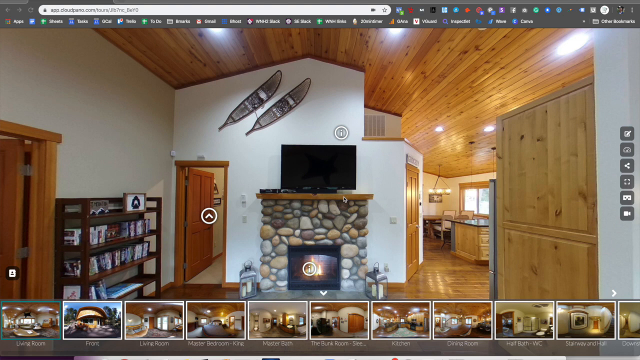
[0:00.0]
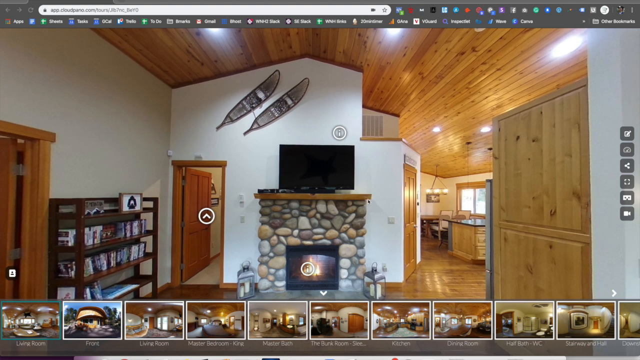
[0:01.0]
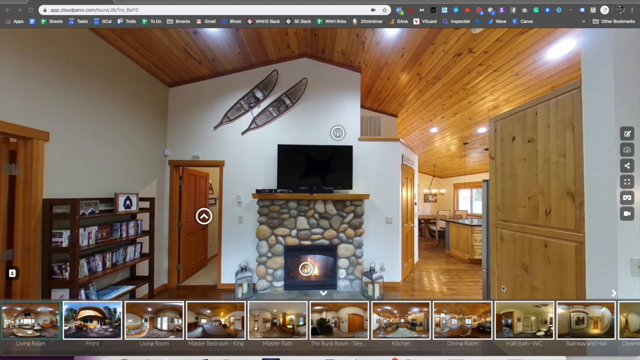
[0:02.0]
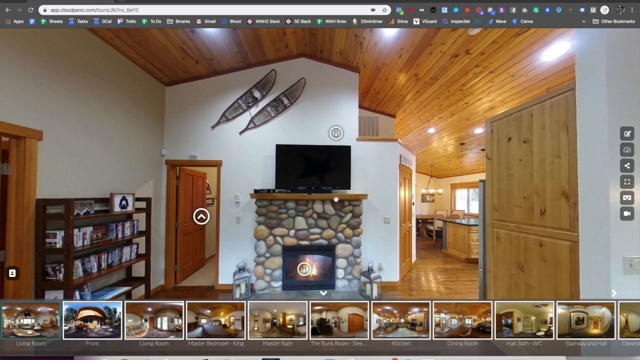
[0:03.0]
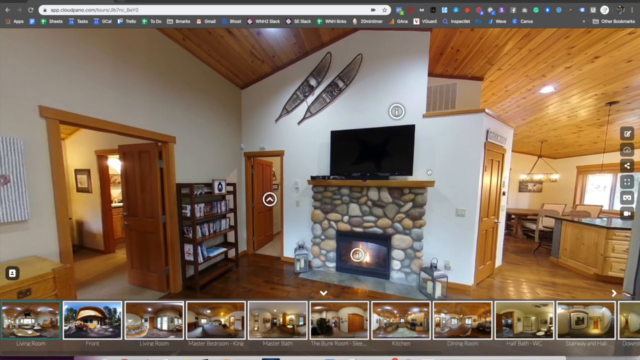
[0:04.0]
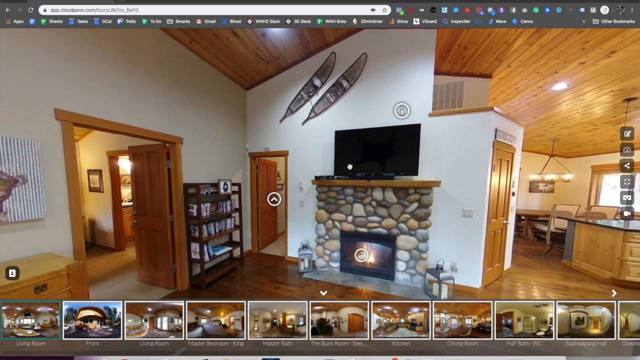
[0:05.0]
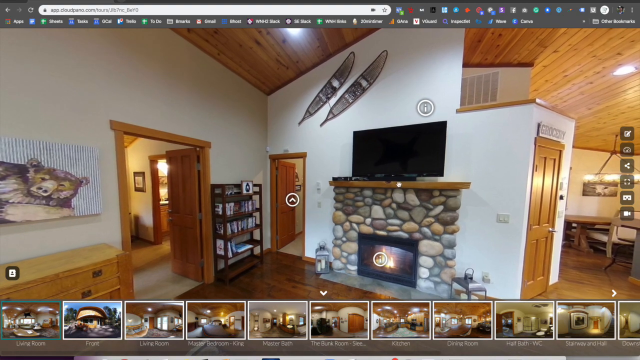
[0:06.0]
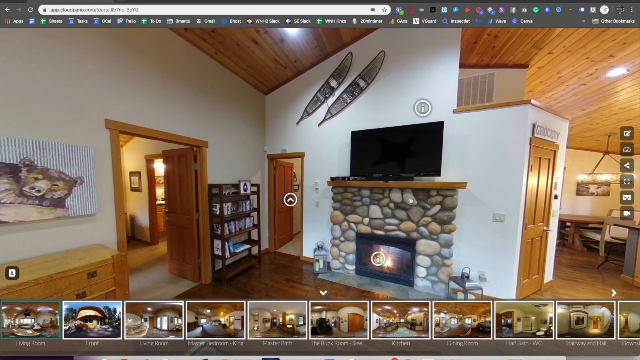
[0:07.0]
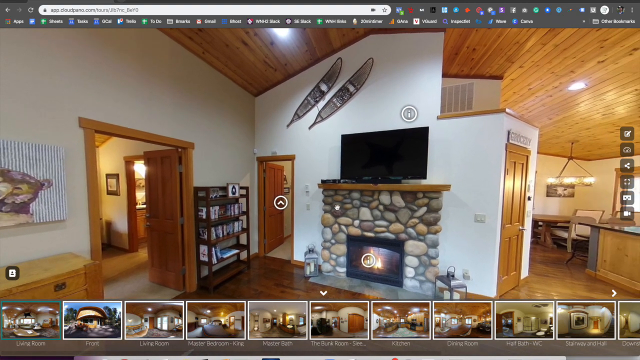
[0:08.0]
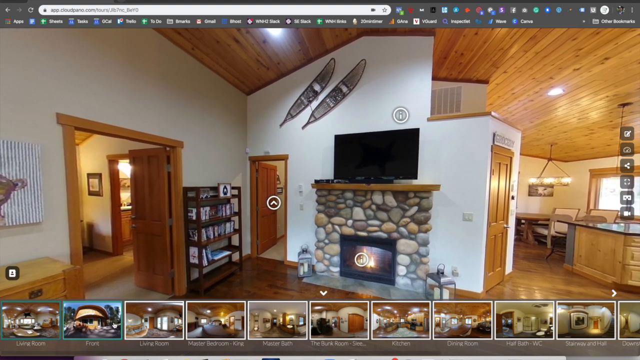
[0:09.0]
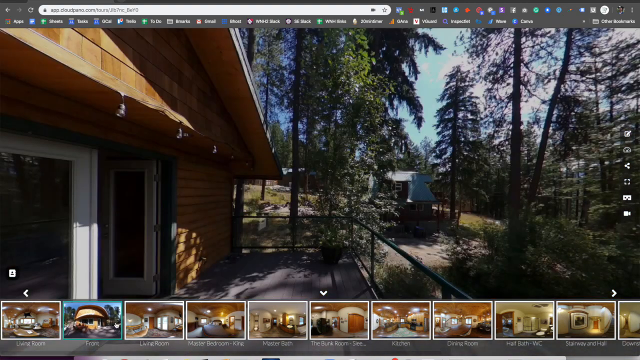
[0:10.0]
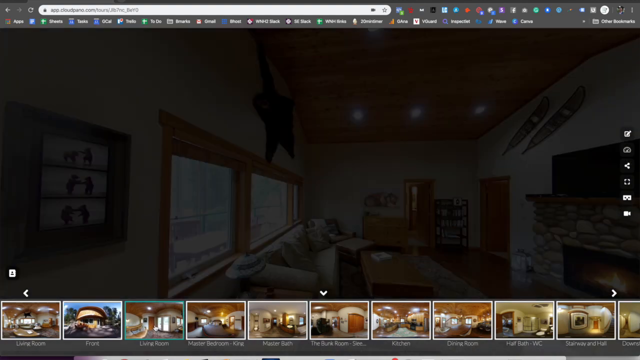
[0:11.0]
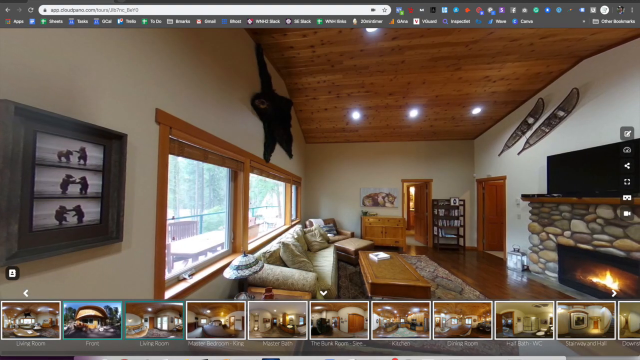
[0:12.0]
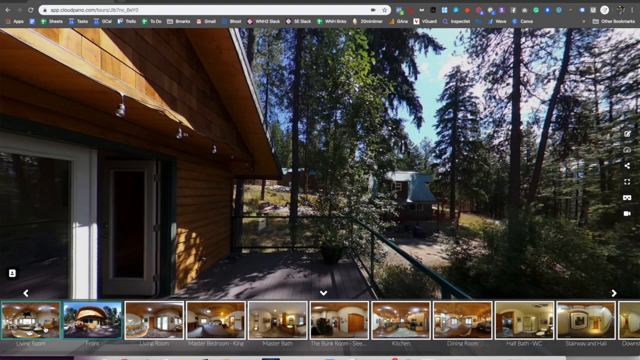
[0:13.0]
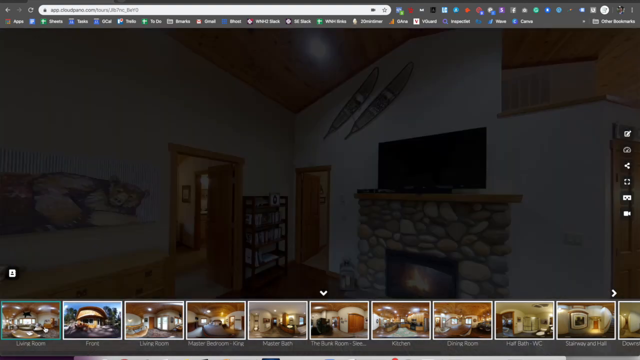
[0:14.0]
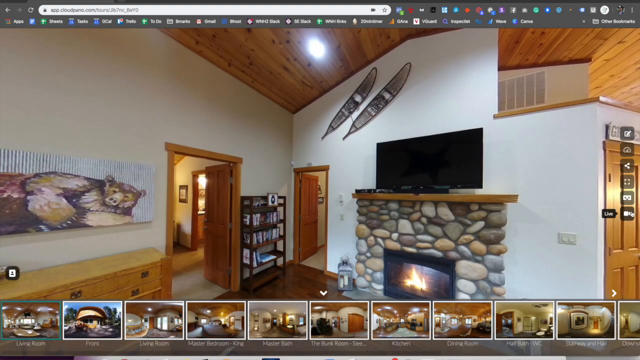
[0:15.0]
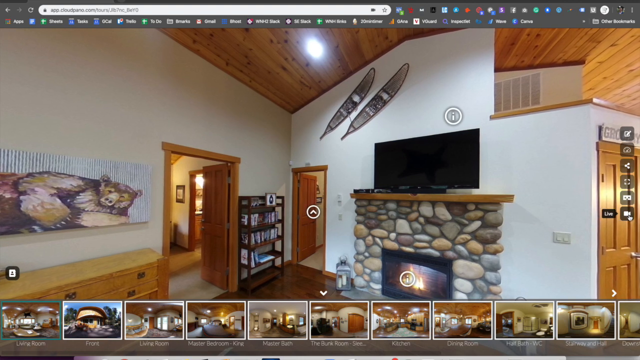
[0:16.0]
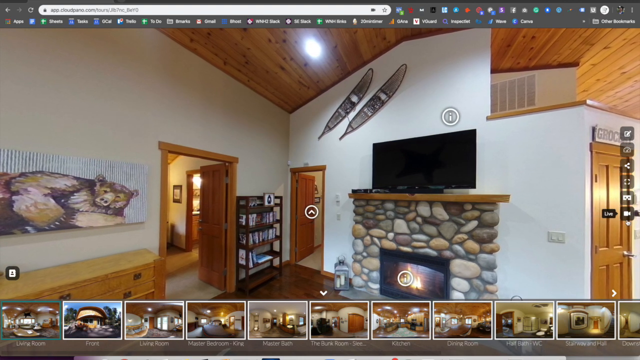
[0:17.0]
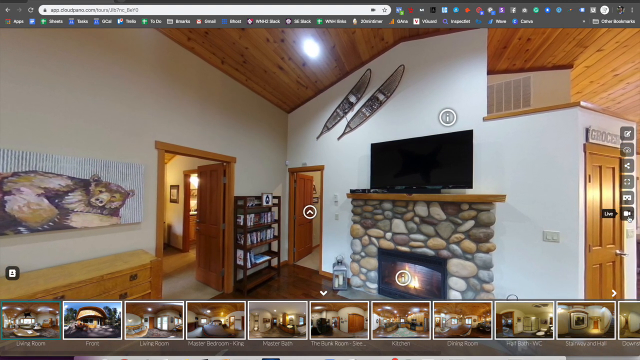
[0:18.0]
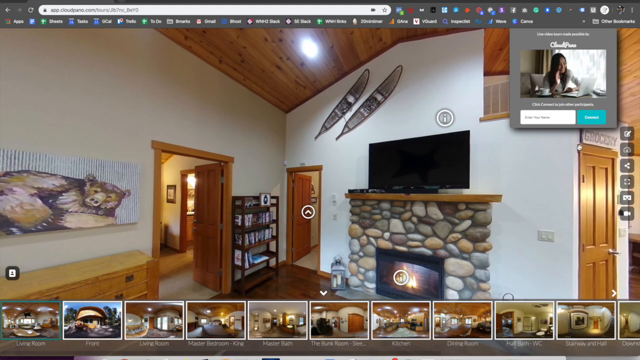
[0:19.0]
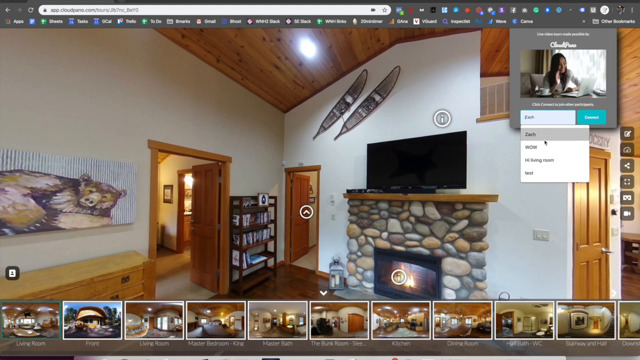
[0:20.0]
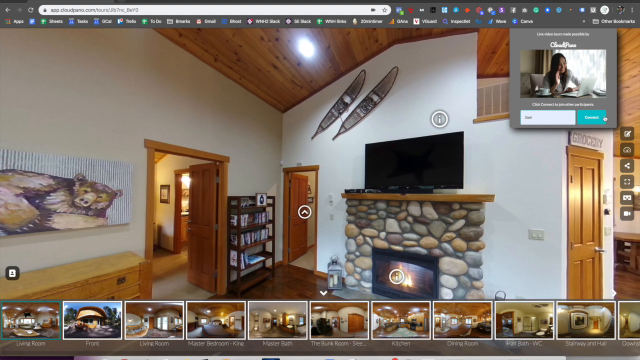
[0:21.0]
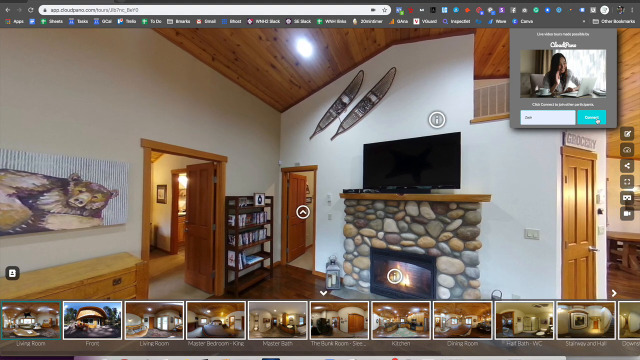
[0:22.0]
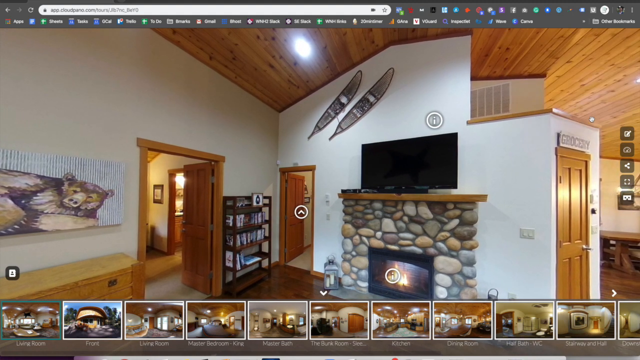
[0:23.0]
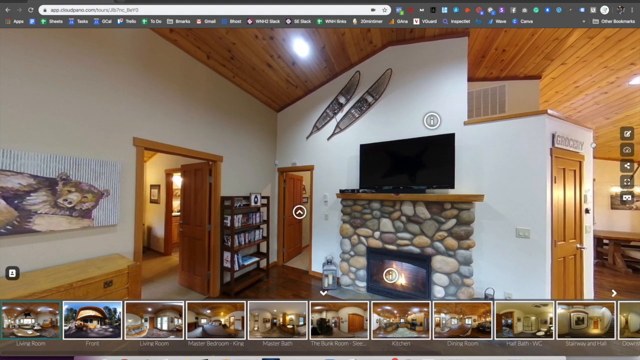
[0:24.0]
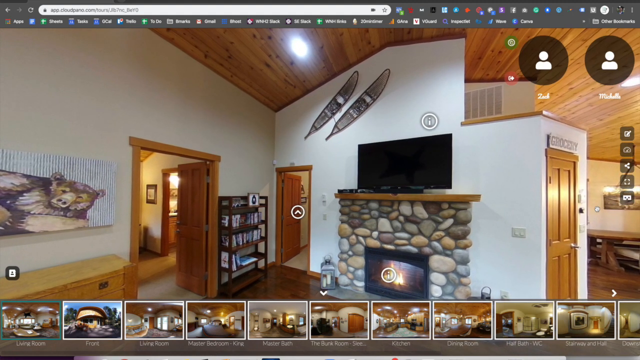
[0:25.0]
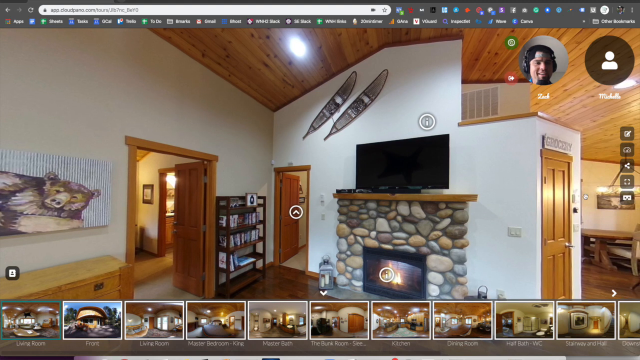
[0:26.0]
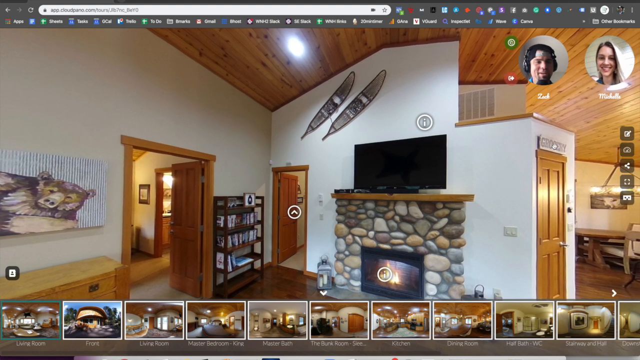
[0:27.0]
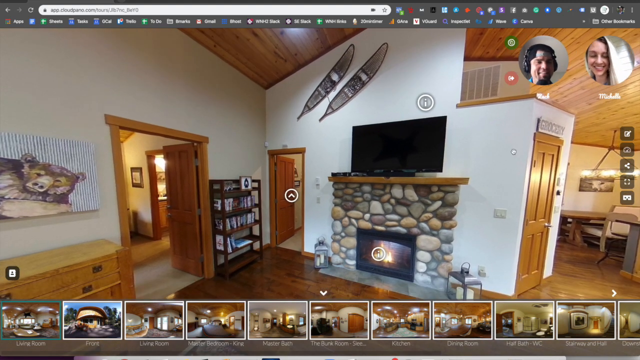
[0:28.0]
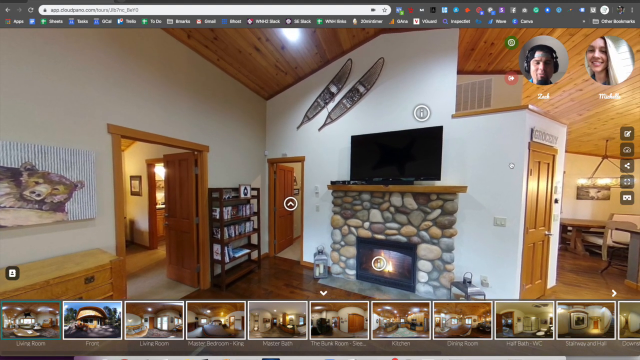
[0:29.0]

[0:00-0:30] People appear to be playing in a virtual reality world. The setting looks like kind of a ski lodge or a house that could be a log house. Along the bottom is a whole row of all the rooms that can be entered, and there is a stone fireplace in the back. The view goes outside just for a moment, showing pine trees and a porch, as each different area is shown. In the upper right-hand corner there are two players. The one on the left is Zach, who has a headset on and dark, slightly curly hair. The girl is Michelle, who has long blonde hair. There are two snowshoes up at the top of the TV and fireplace area.